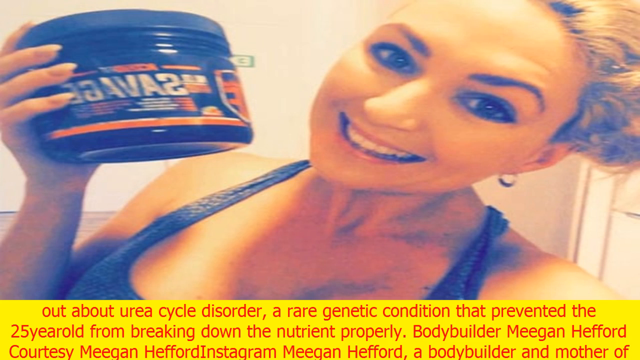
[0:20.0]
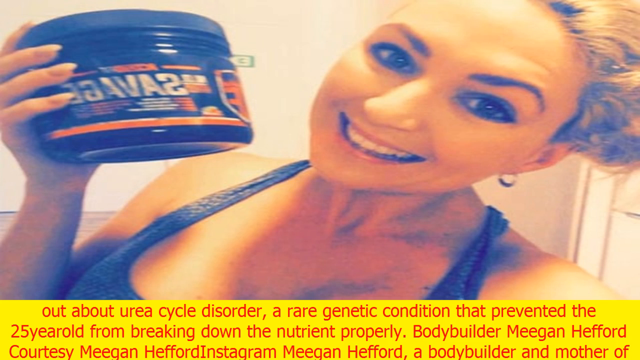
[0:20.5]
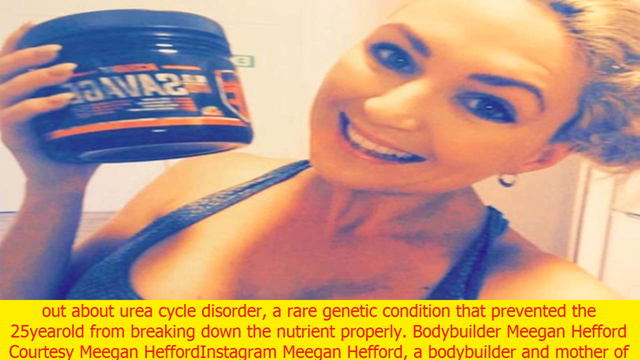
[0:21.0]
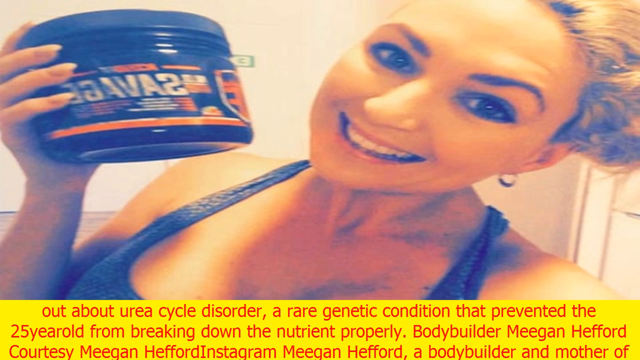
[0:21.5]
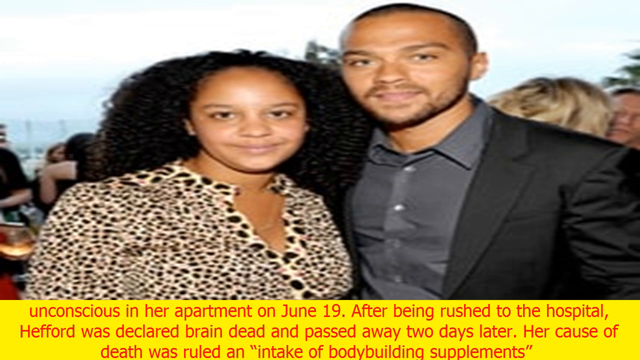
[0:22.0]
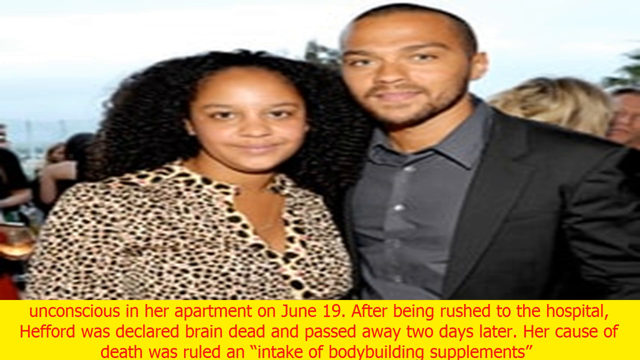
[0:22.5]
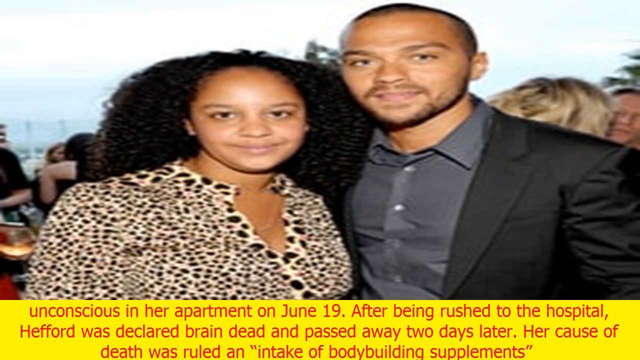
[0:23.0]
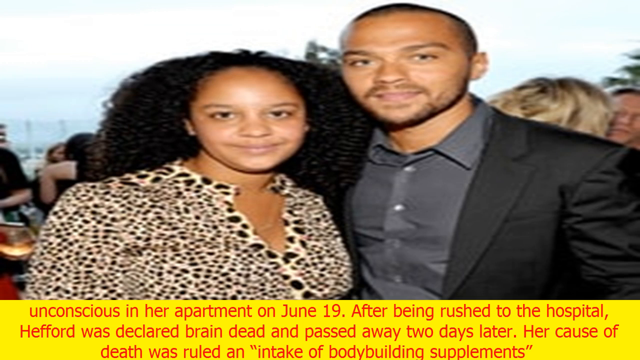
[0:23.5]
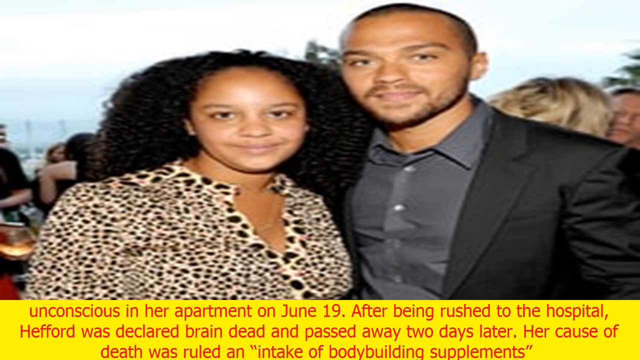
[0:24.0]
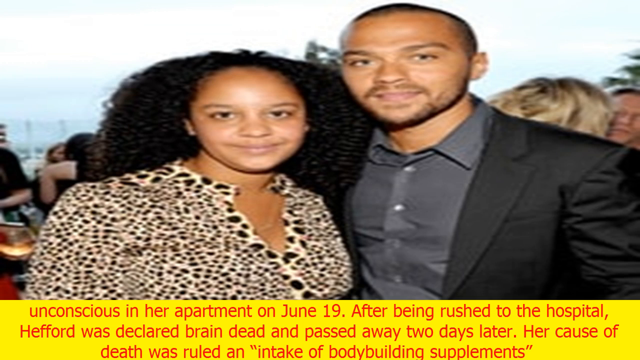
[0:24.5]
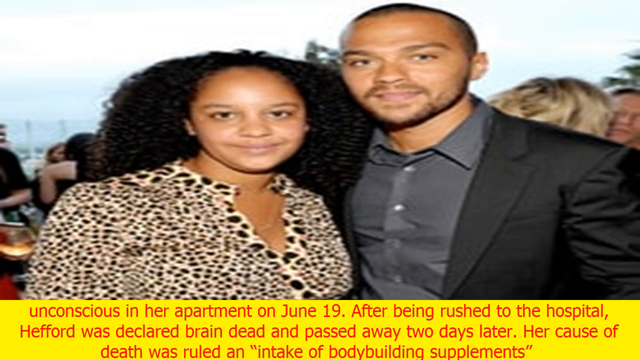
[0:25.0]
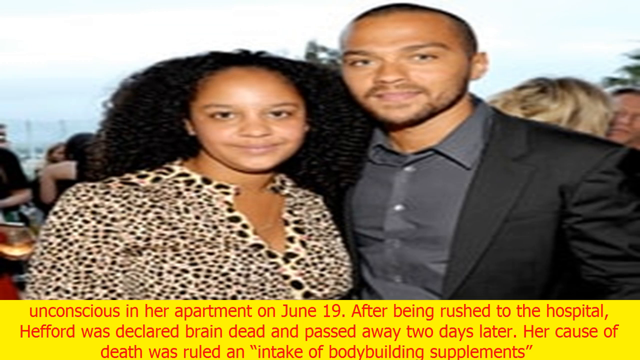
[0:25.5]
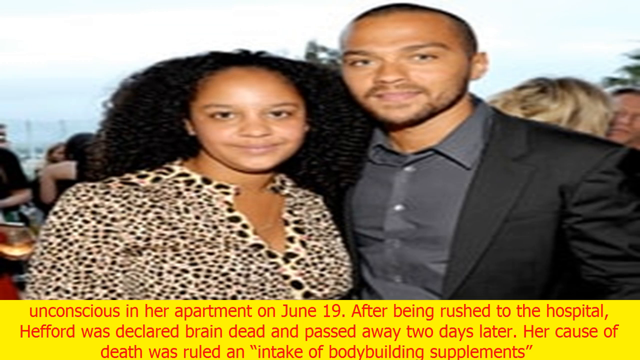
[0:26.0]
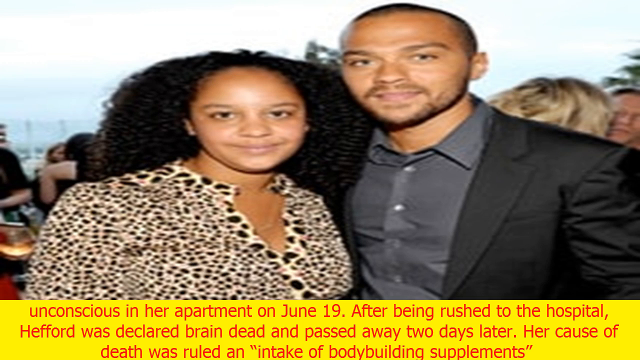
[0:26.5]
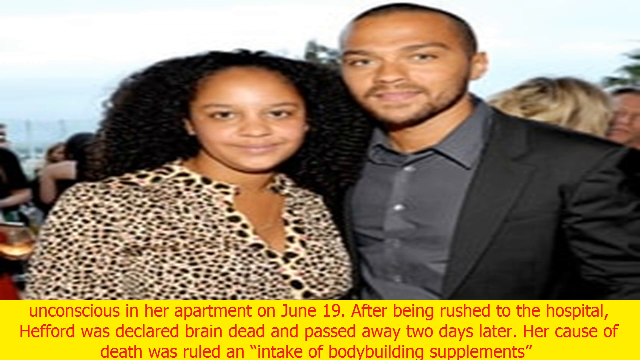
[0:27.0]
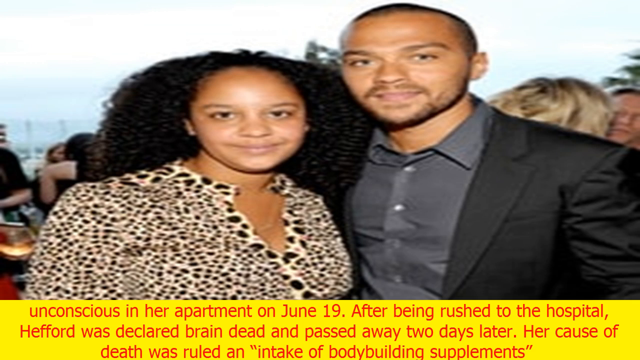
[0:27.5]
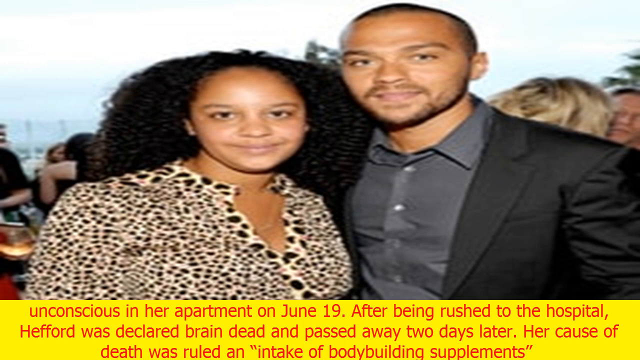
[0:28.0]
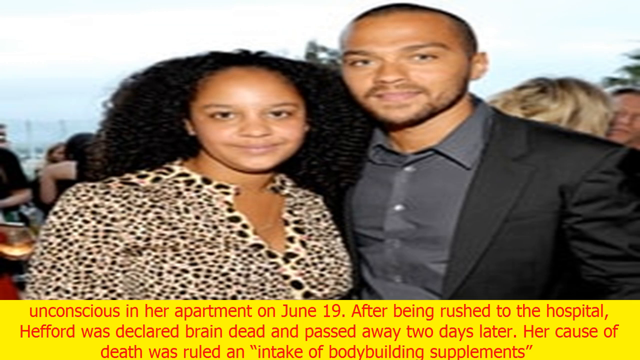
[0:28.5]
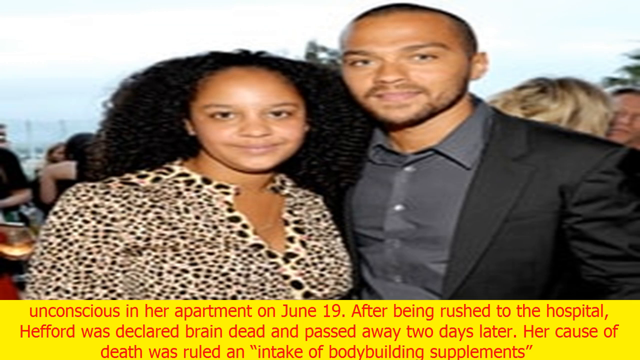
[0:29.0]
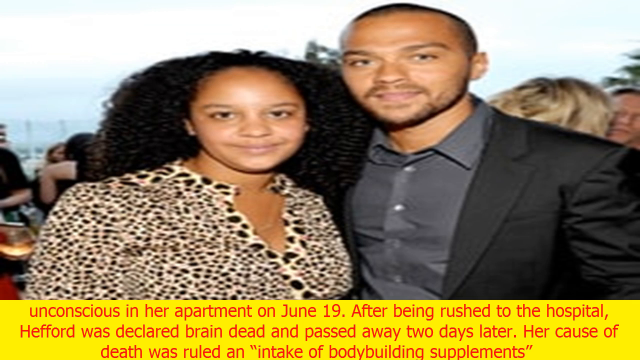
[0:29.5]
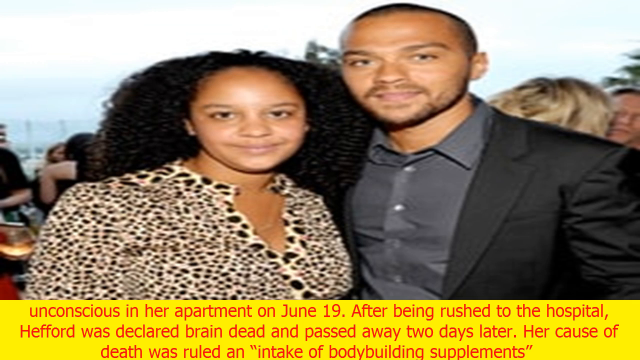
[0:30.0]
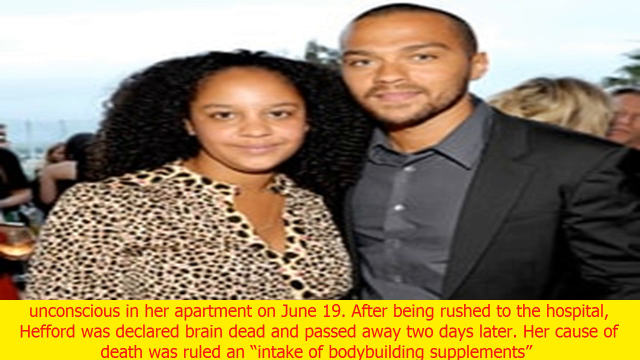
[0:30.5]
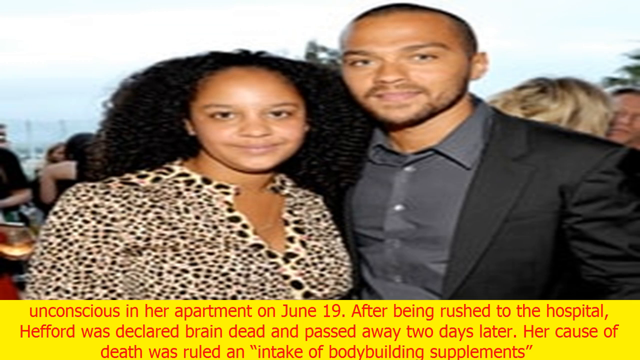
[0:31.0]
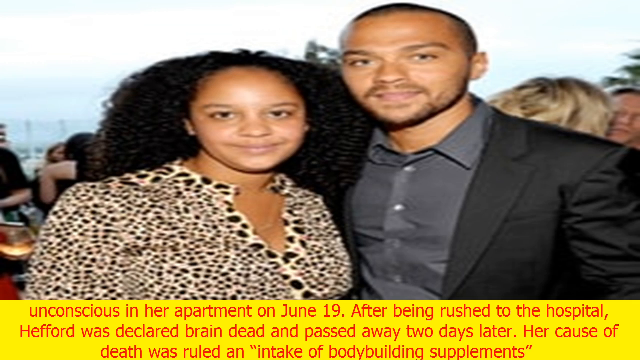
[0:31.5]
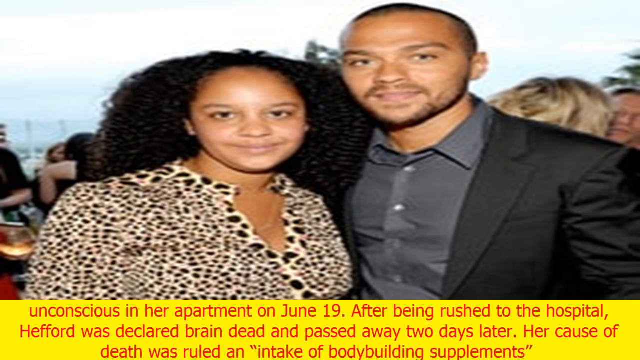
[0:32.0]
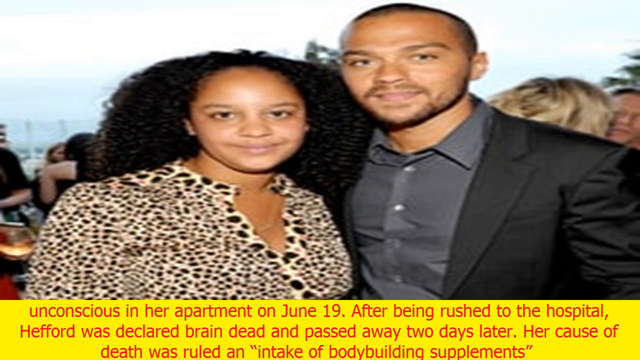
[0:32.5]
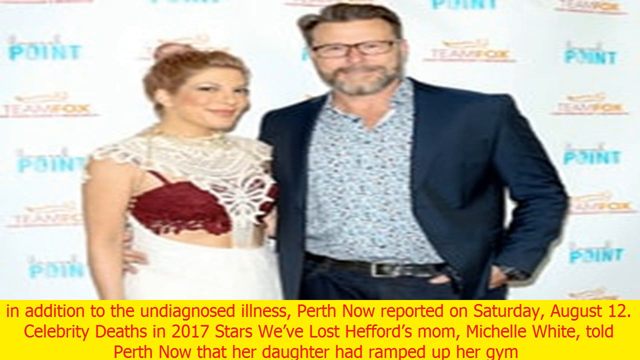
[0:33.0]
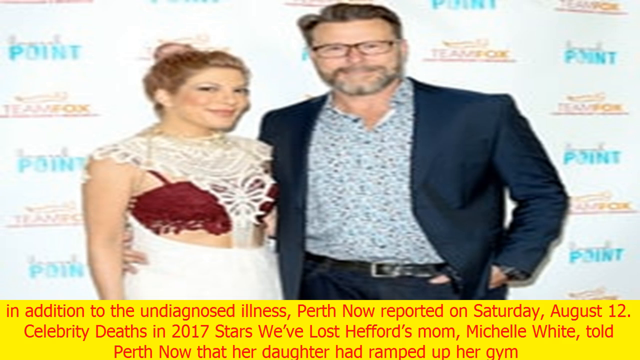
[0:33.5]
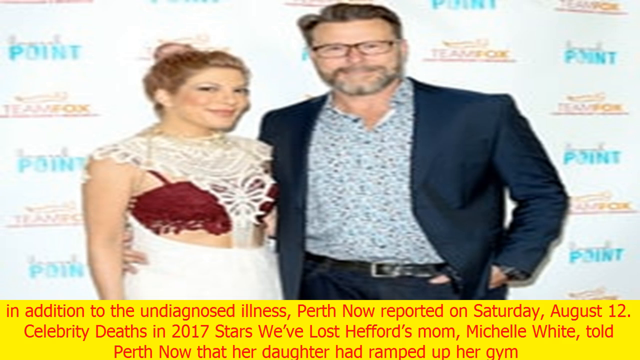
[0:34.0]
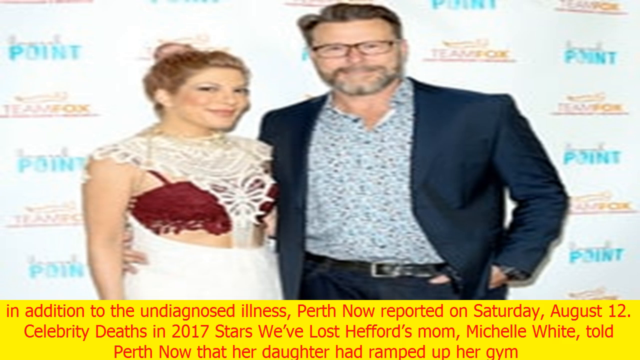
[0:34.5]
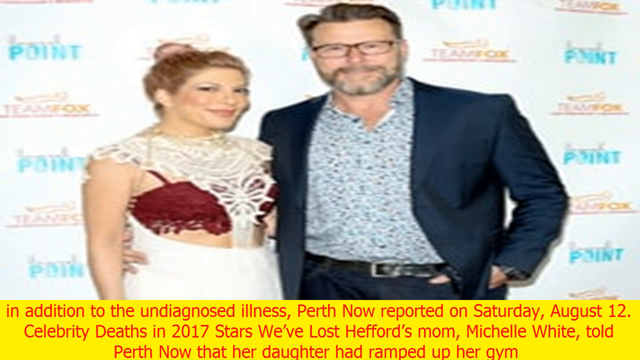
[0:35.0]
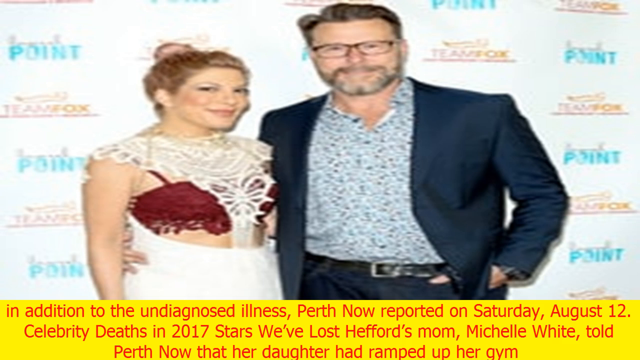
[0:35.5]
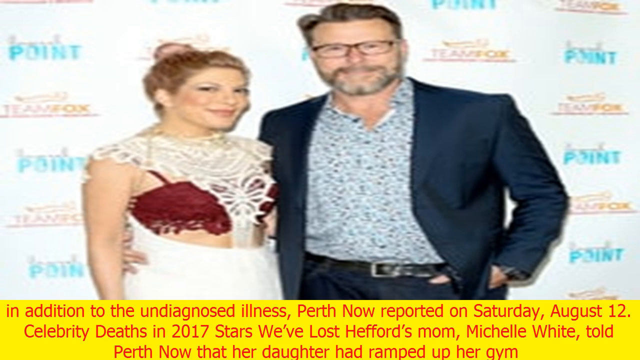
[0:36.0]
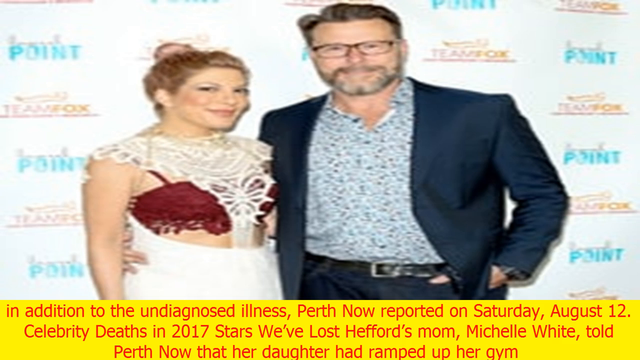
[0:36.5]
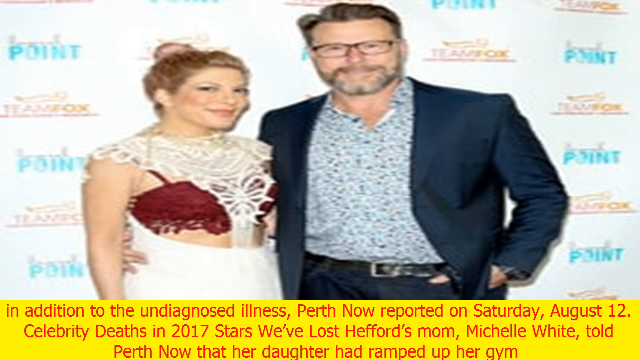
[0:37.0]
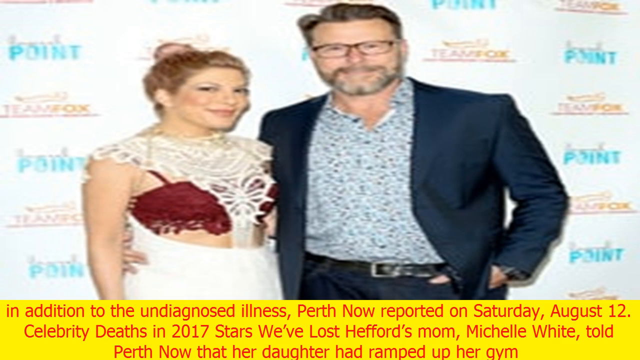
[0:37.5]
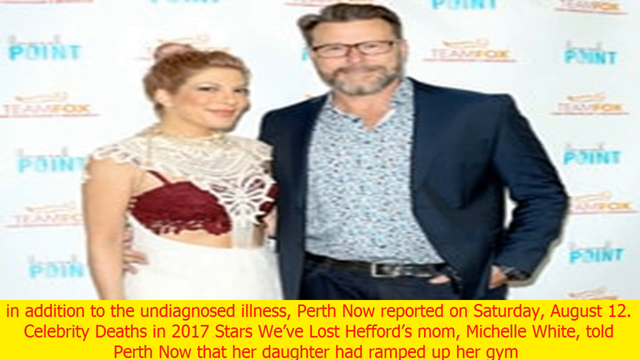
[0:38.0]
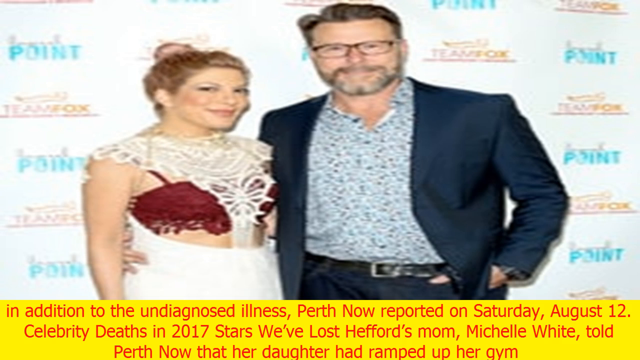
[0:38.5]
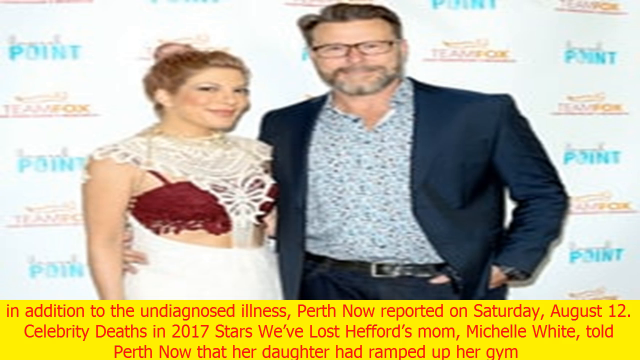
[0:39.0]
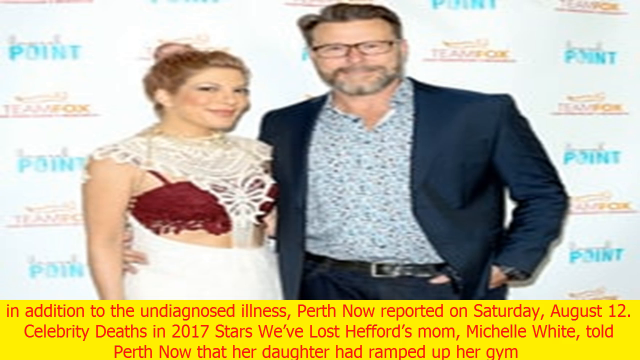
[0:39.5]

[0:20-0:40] The image of the woman holding protein continues, with a description below it of what happened to her: she ended up in the hospital and was declared dead two days later from taking too much protein. Next comes an image of an actor from Grey's Anatomy, probably with a fan, in a setting where many people are present and dressed very elegantly. Another image follows of two probably famous people, a man and a woman, also dressed very elegantly, with superimposed text. The text apparently moves on to what her daughter did after her mother's death, going to find the gym where her mother trained.